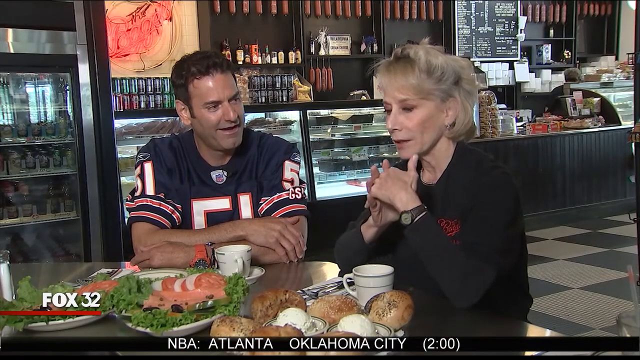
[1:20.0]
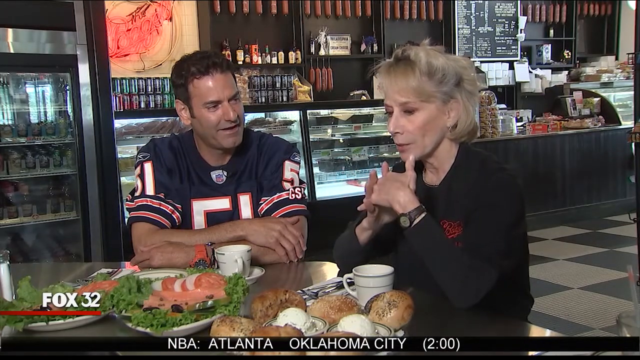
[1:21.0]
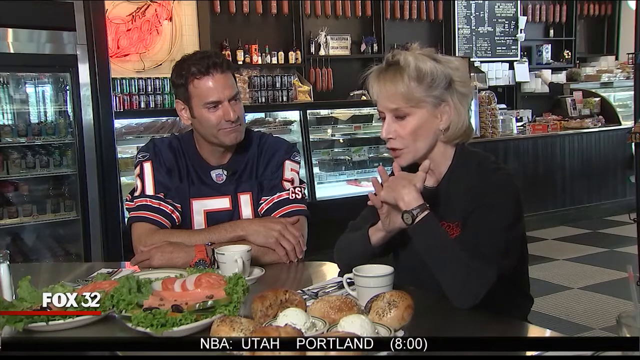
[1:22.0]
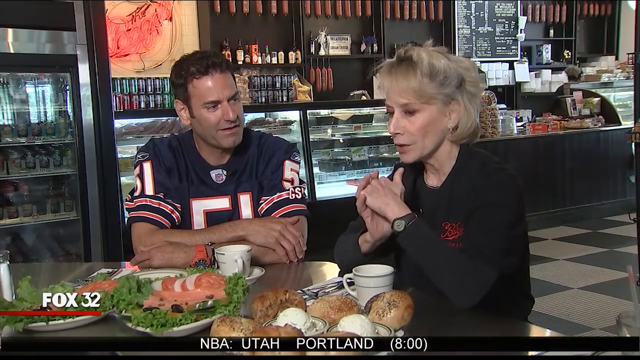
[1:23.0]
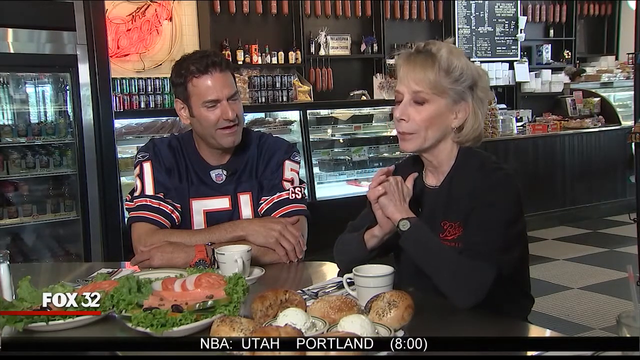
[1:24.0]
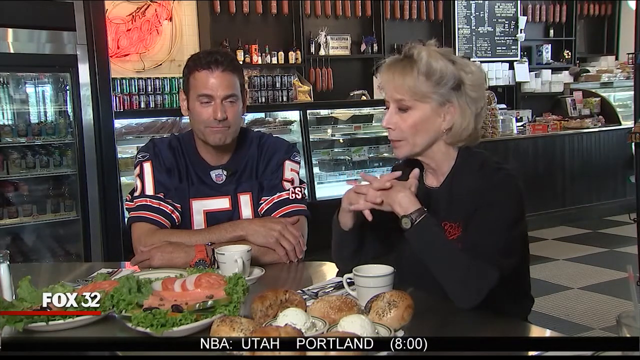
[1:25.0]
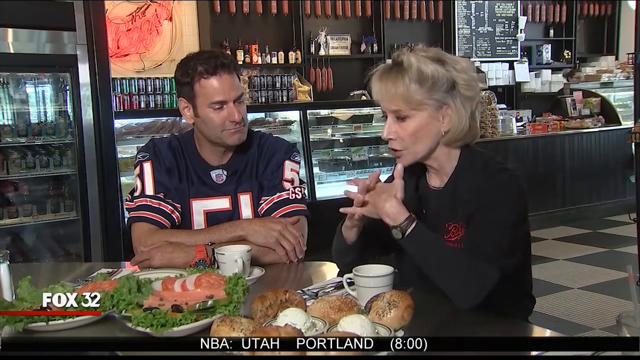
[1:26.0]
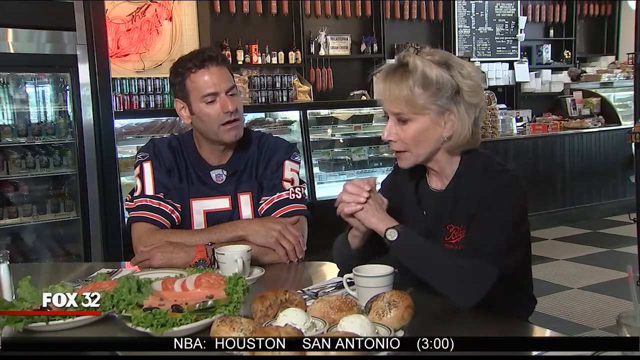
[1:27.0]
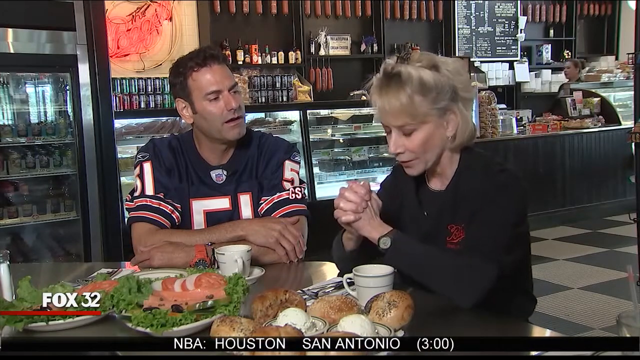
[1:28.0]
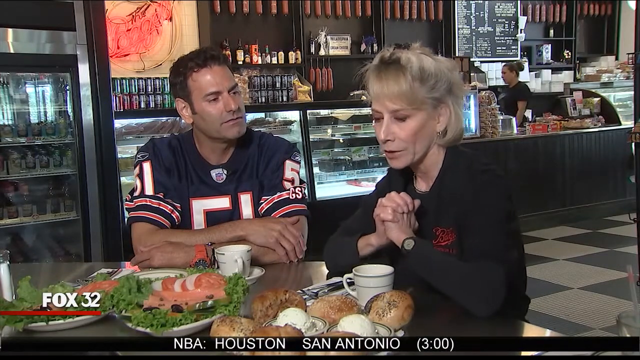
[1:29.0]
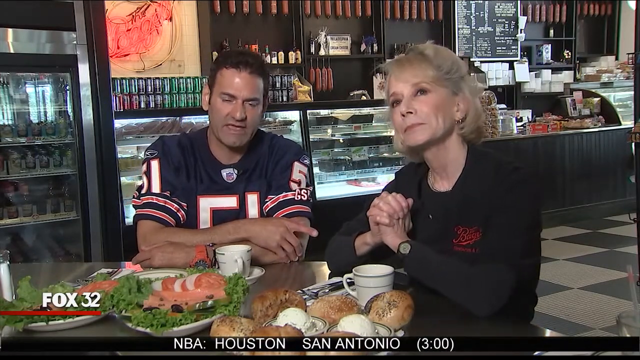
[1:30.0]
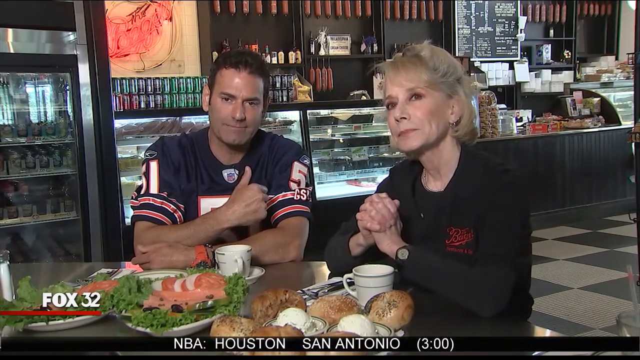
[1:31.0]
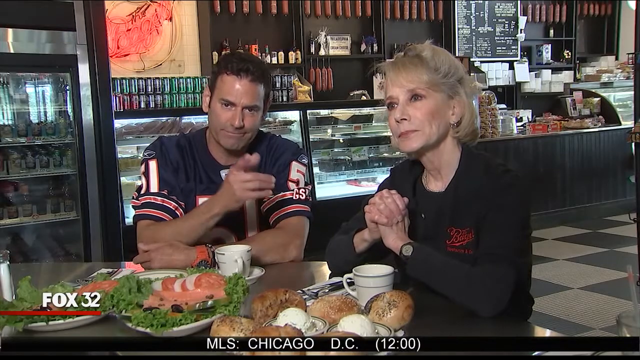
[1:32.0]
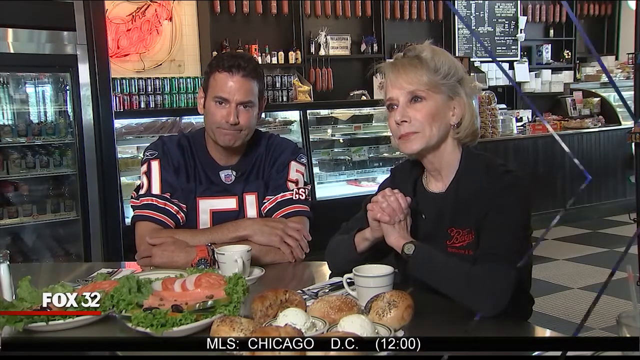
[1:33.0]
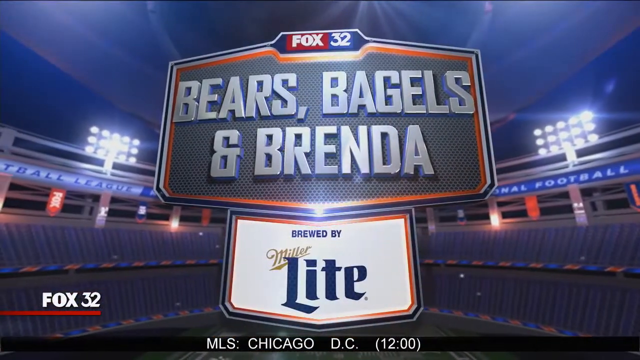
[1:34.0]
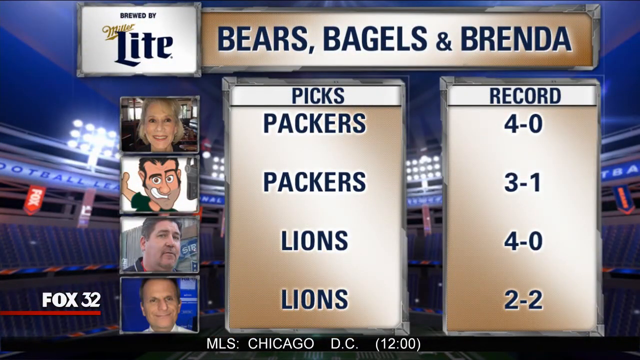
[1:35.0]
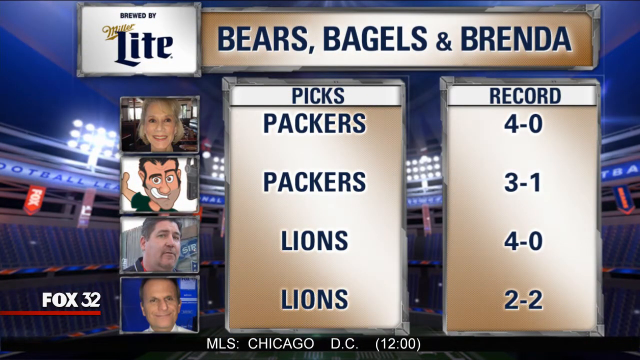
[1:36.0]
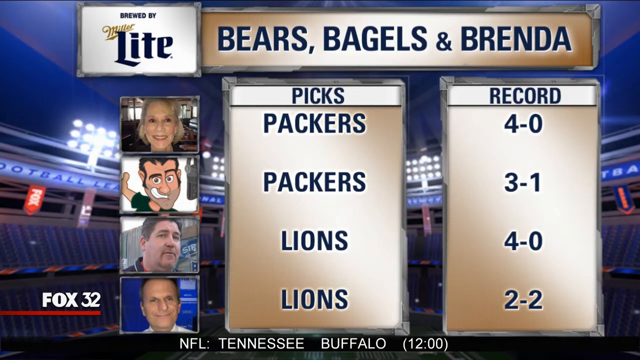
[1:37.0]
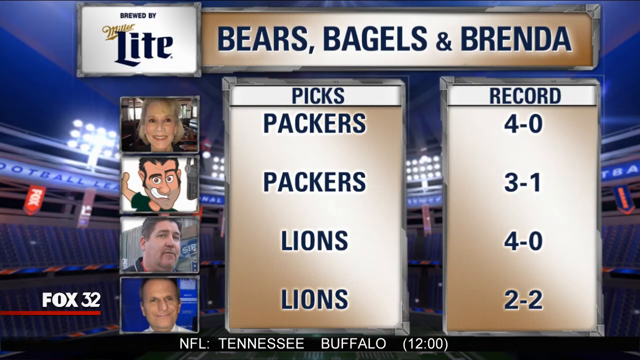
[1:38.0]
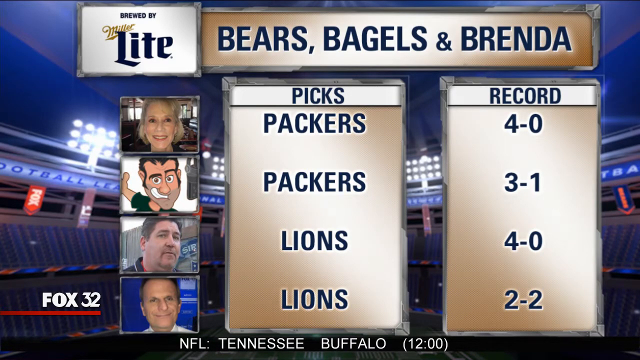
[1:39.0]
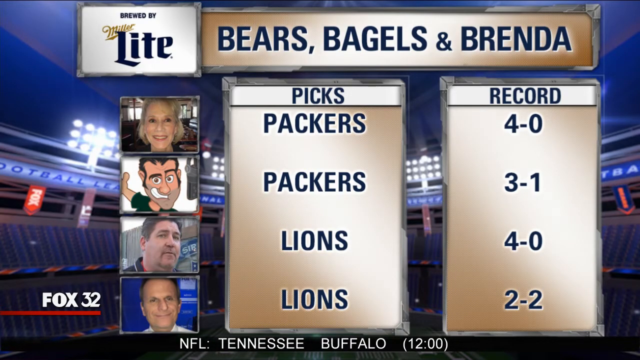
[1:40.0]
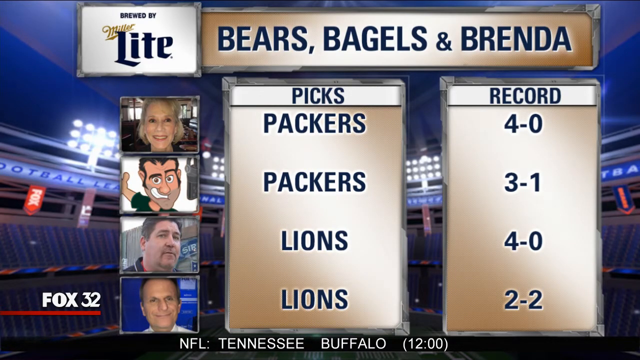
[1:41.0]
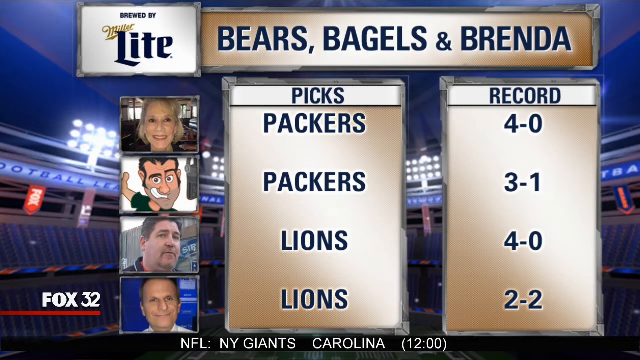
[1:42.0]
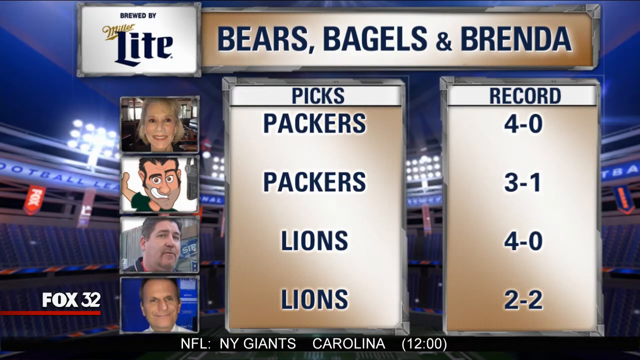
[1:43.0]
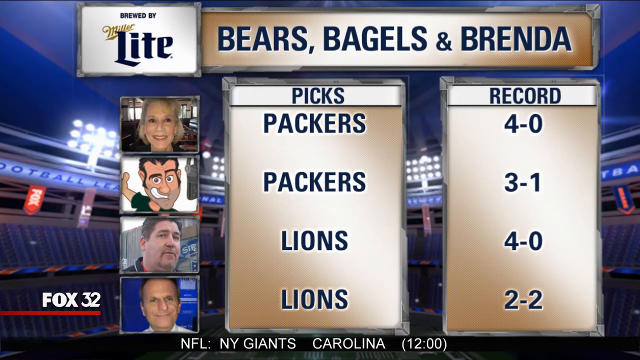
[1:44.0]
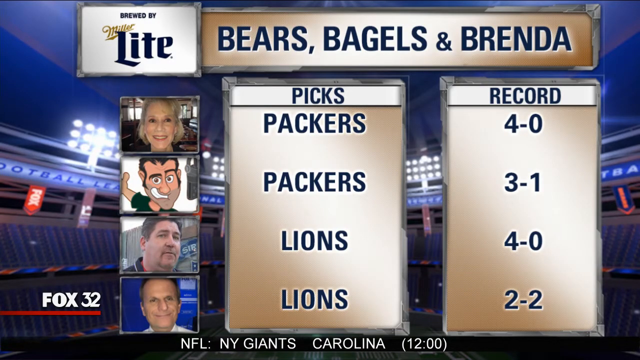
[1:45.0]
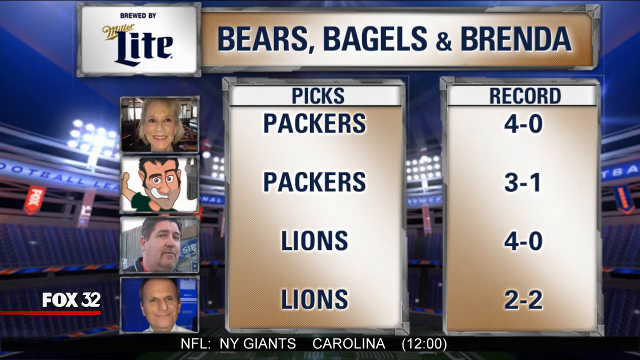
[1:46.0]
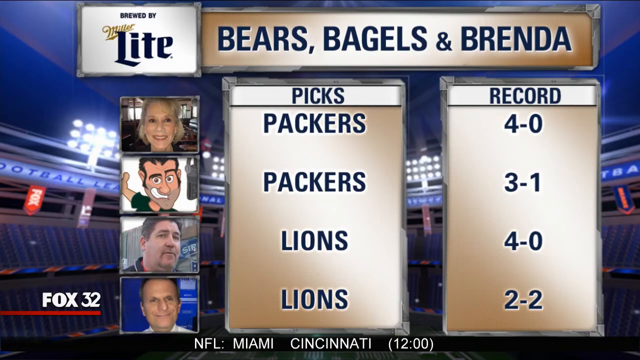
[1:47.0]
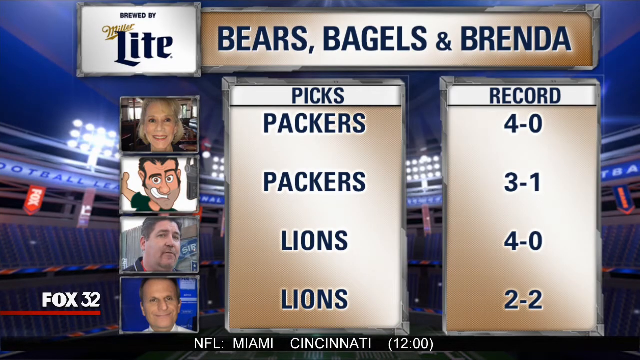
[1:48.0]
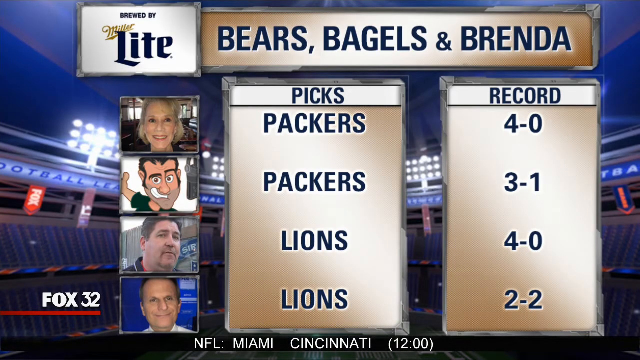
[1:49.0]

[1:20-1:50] A woman with blonde hair, a black watch and a black top sits next to a man in a navy football jersey with the number 51 at a restaurant, with food in front of them: bread, cheese, tomatoes, lettuce, maybe some olives, and two mugs. The lady talks to the man without making eye contact as they talk to each other. The man then talks to the camera. The video switches to a screen of results for some sort of contest, with "Bear's Bagels and Brenda" on top. The screen shows the contest in a table, like a bet, with the headings "picks" and "record"; beneath them, two people chose the Packers and two chose the Lions, with apparently similar records.